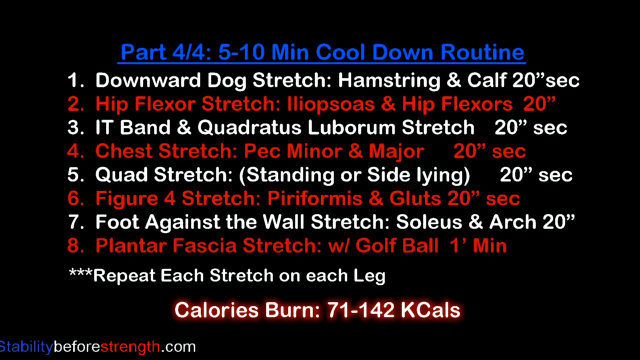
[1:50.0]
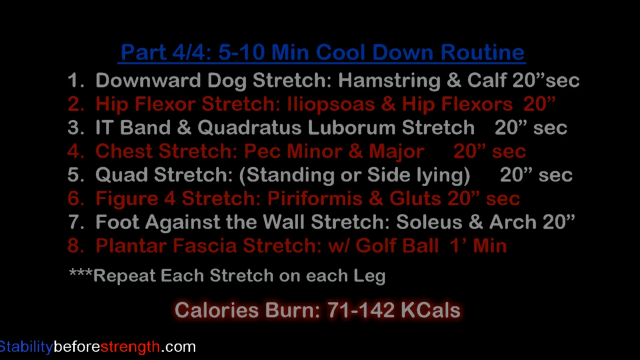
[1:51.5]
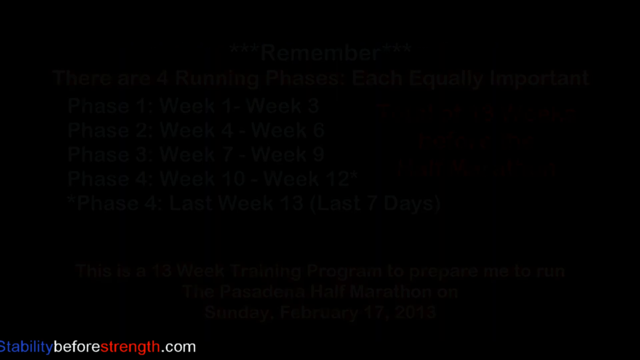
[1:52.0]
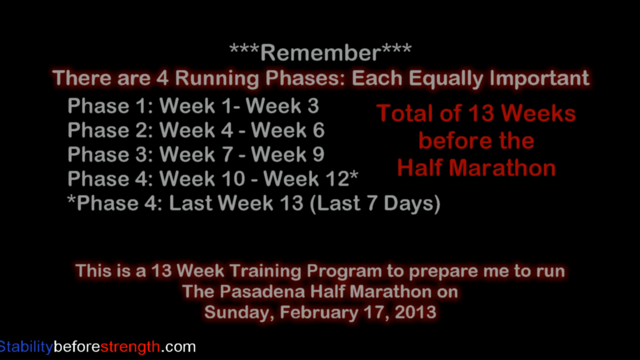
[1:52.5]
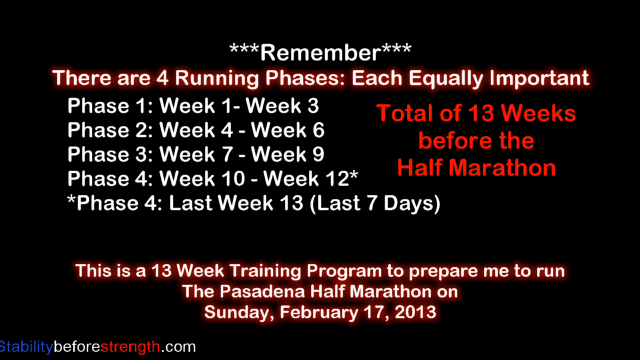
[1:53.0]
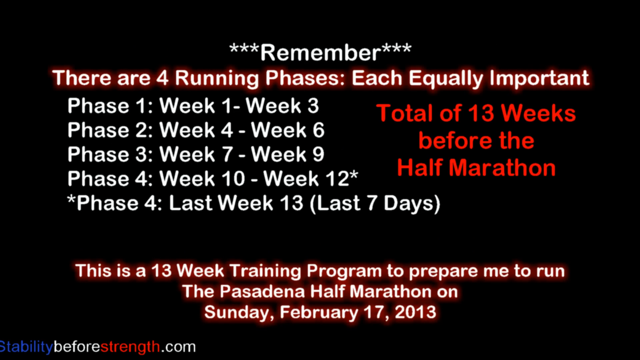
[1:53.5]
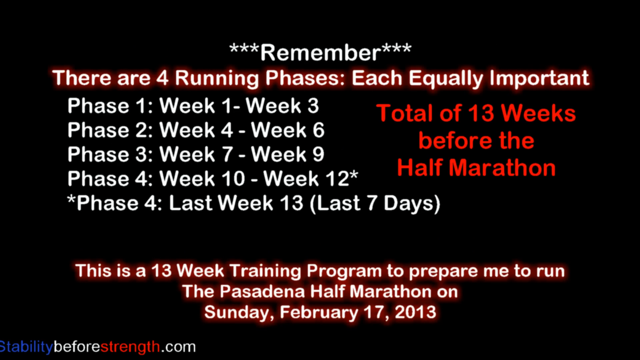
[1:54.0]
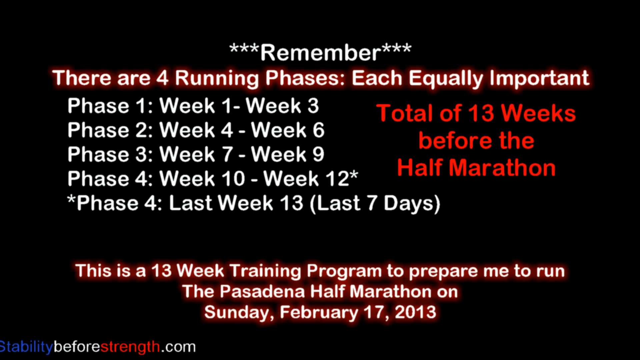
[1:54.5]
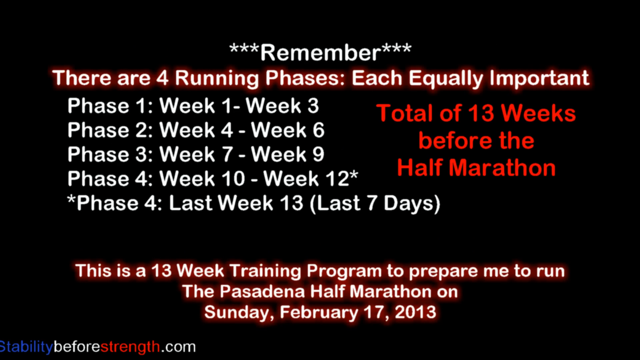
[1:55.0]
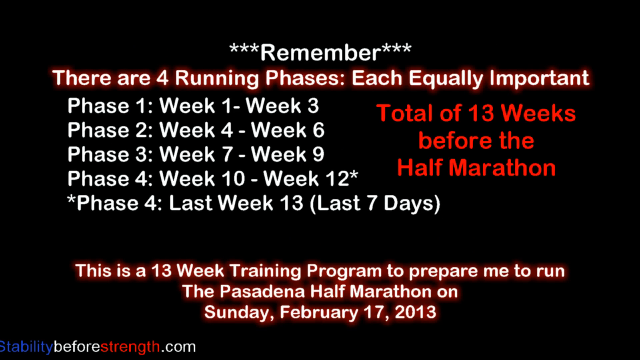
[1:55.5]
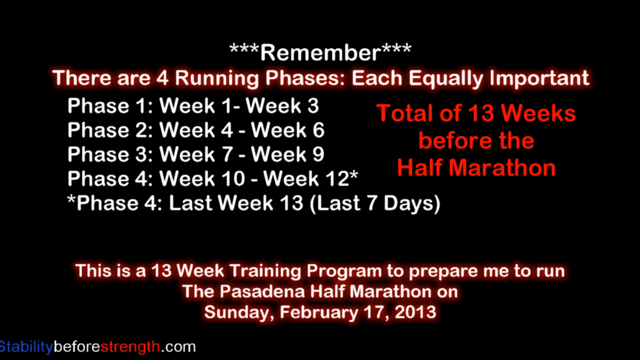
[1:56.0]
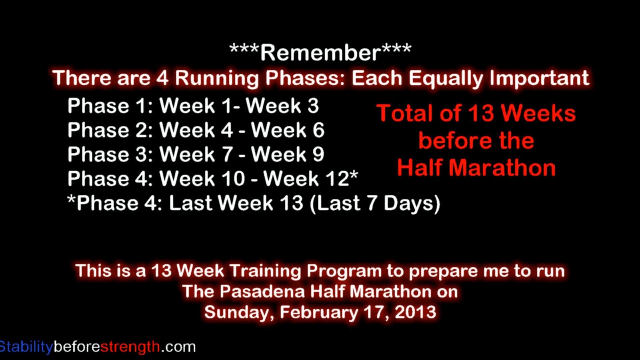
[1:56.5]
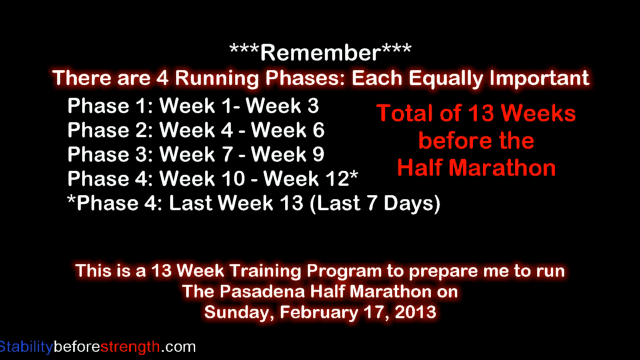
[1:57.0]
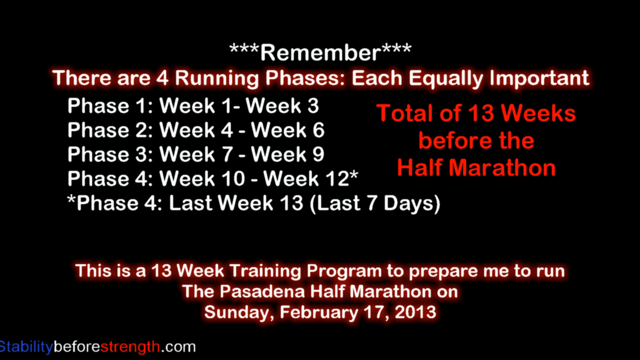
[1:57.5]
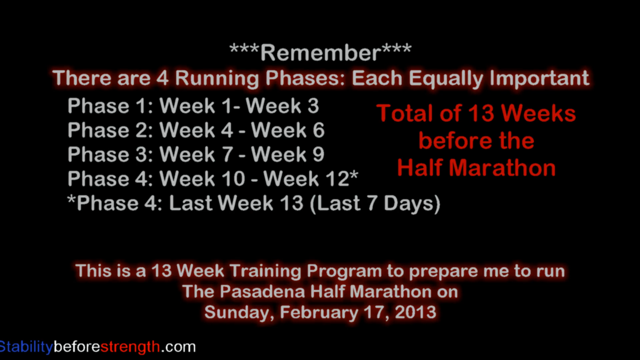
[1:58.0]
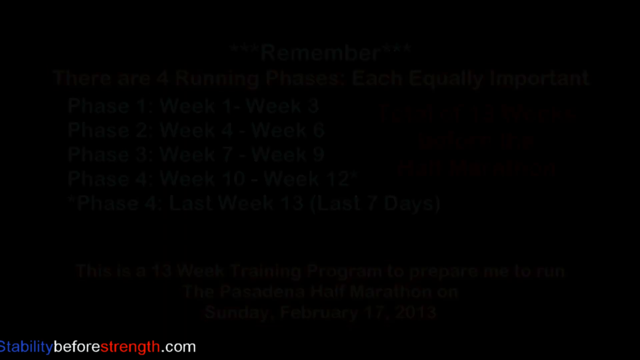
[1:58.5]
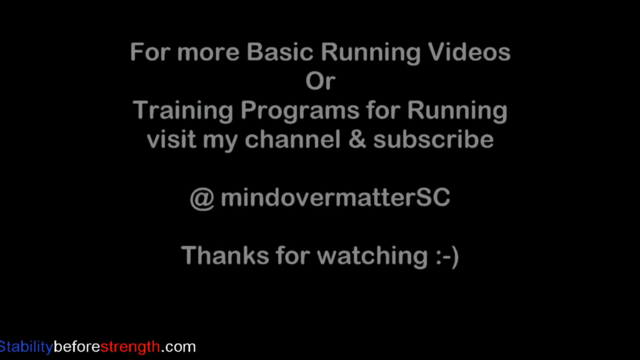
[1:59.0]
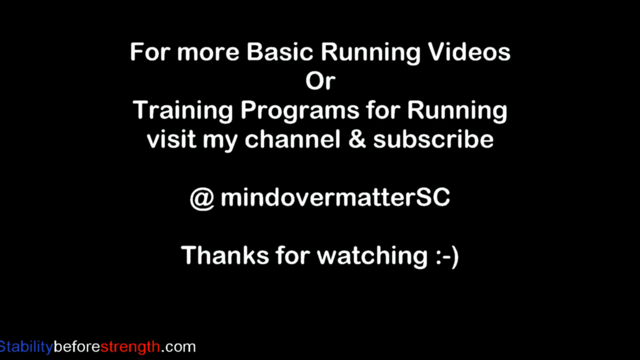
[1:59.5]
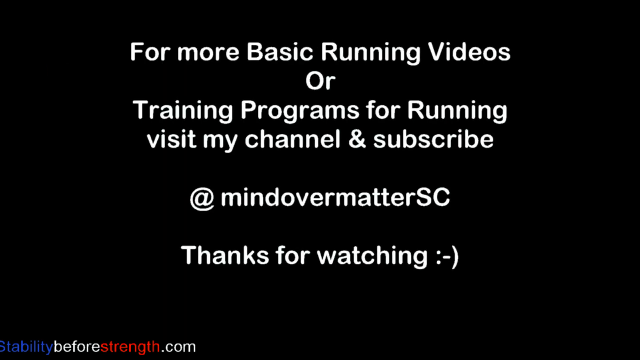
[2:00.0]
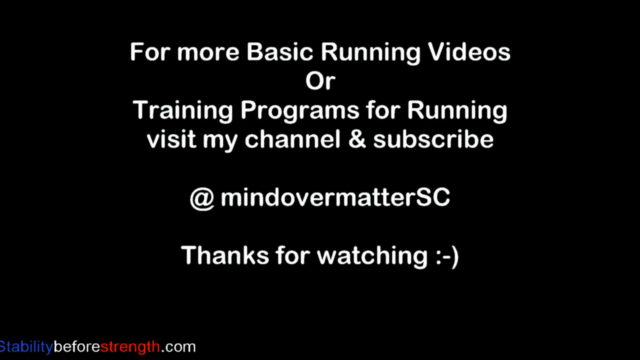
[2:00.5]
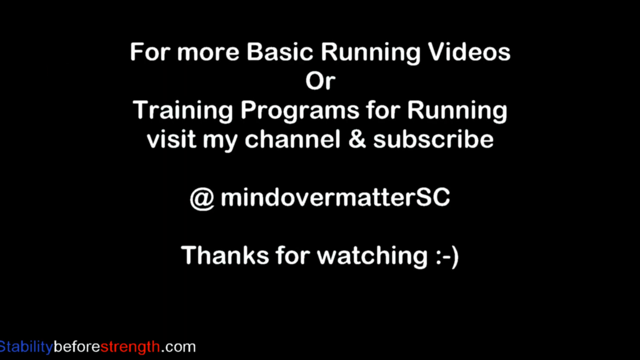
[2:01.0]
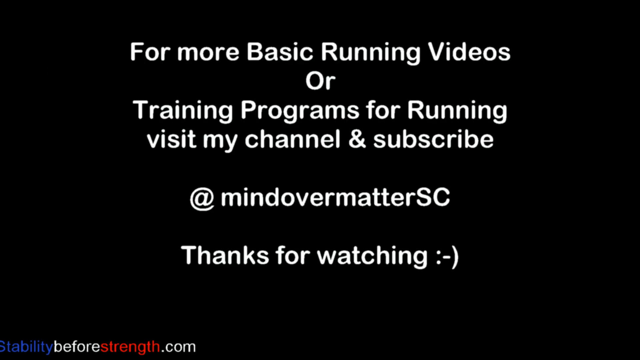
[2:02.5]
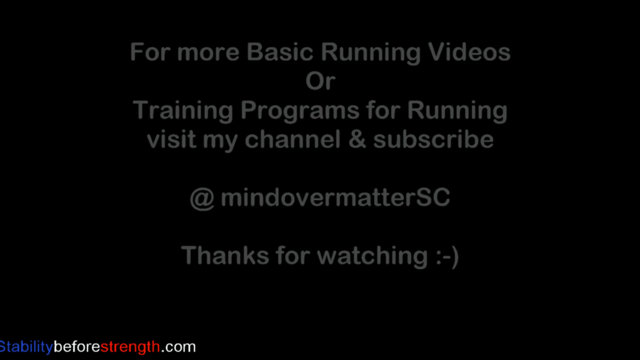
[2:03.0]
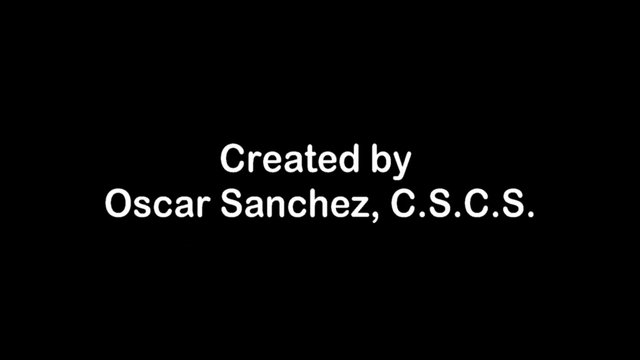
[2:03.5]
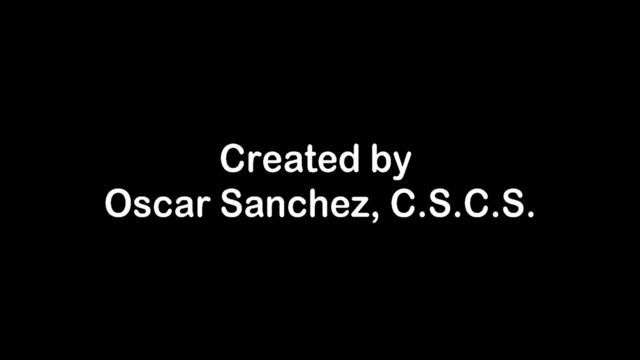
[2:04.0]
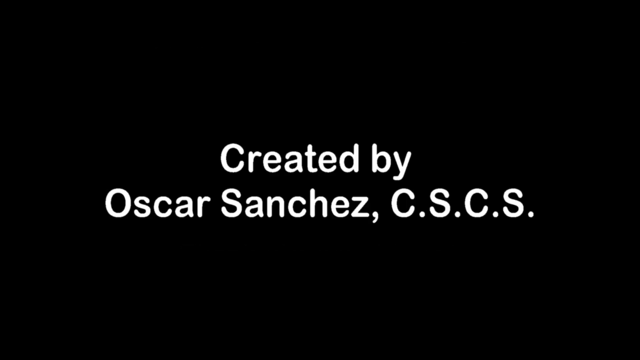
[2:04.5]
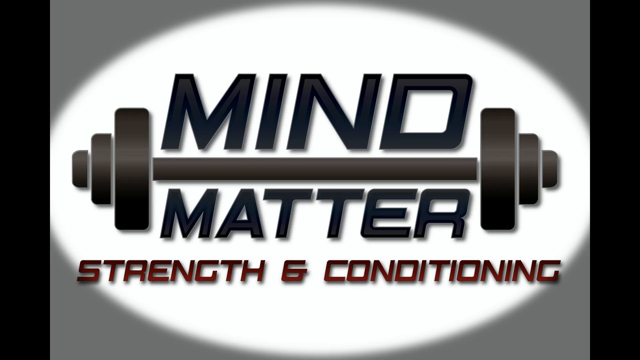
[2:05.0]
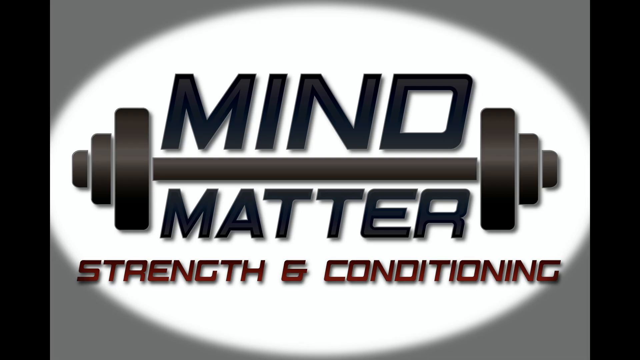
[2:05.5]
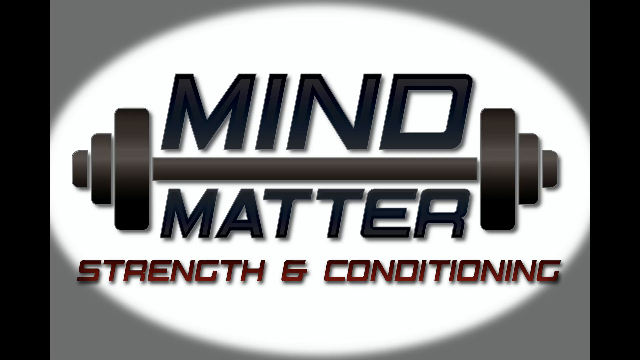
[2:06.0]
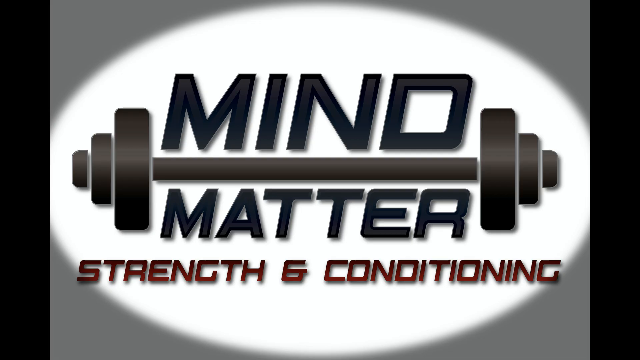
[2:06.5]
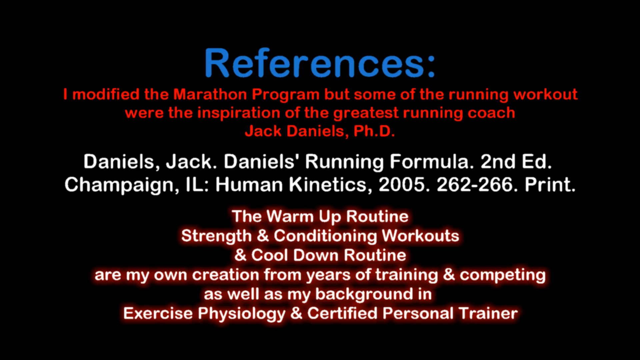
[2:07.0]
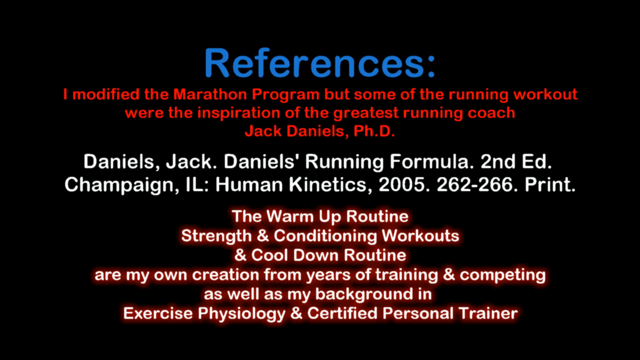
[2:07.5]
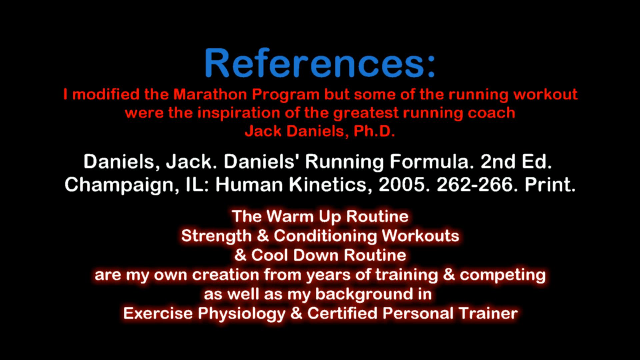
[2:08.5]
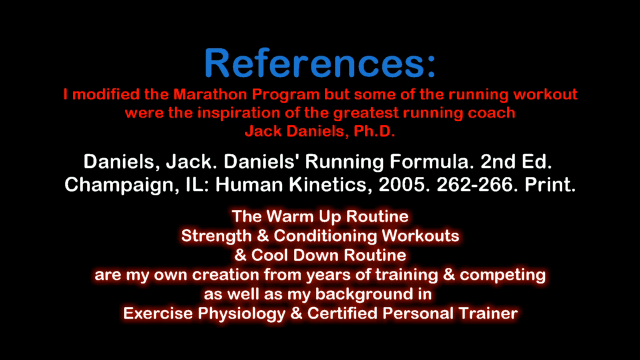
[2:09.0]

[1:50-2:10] A black background shows blue, white and red text reading "Part four of four, five to ten minute cool down routine. 1 downward dog stretch hamstring and calf 20 sec. 2 hip flexor stretch" and continuing "3 IT band and quadratus lumbarum stretch 20 sec. 4 chest stretch pec minor and major 20 sec. 5 quad stretch standing or side lying 20 sec. 6 figure four stretch piriformis and glutes 20 sec. 7 foot against the wall stretch soleus and arch 20. 8 plantar fascia stretch with golf ball one minute. Repeat each stretch on each leg. Calories burn 71 to 142 kcals." The video transitions to another black screen with white and red text reading "Remember there are four running phases, each equally important. Phase 1 week 1 to week 3, phase 2 week 4 to week 6, phase 3 week 7 to week 9, phase 4 week 10 to week 12, phase 4 last week 13, last 7 days. Total of 13 weeks before the half marathon. This is a 13 week training program to prepare me to run the Pasadena half marathon on Sunday February 17 2013." It then transitions to another black screen with bold white text reading "For more basic running videos or training programs for running visit my channel and subscribe at mind over matter sc. Thanks for watching." At the end of the video, text reads "Created by Oscar Sanchez CSCS" alongside a Mind Matter Strength and Conditioning logo, with additional text reading "References: I modified the marathon program but some of the running workout were the inspiration of the greatest running coach Jack Daniels PhD. Daniels, Daniels running formula, second edition, Champagne Illinois, Human Kinetics, 2005, 262 to 266, print. The warm-up routine, strength and conditioning workouts, a cool-down routine are my own creation from years of training and competing as well as my background in exercise physiology and certified personal trainer."